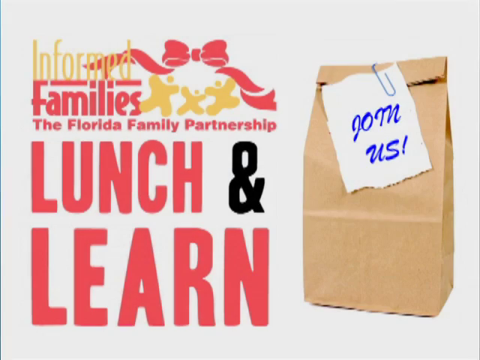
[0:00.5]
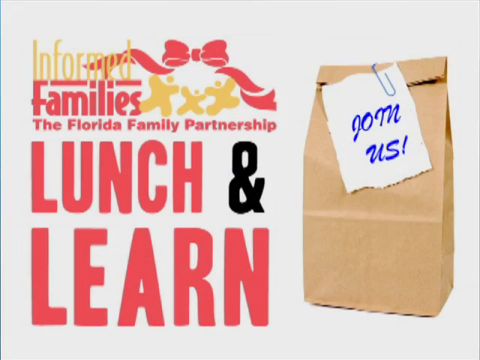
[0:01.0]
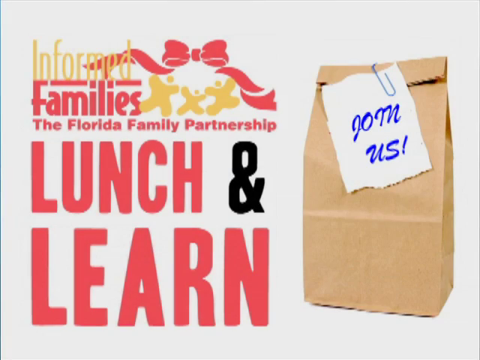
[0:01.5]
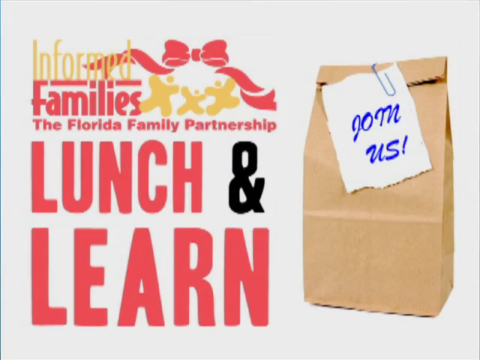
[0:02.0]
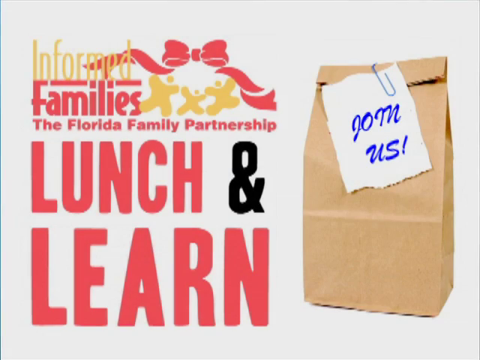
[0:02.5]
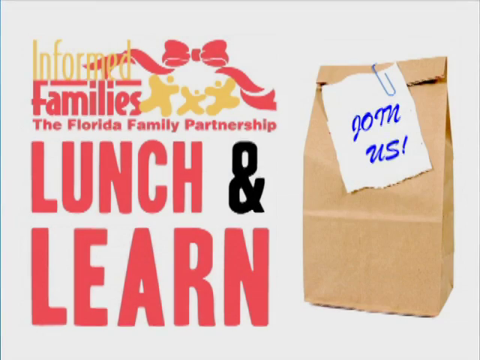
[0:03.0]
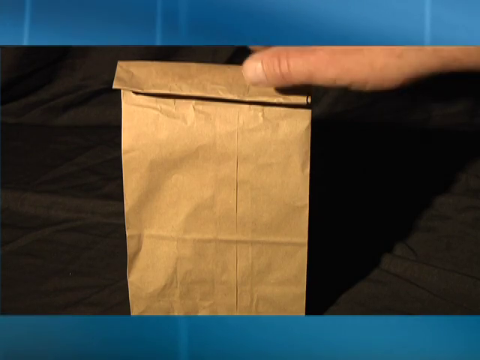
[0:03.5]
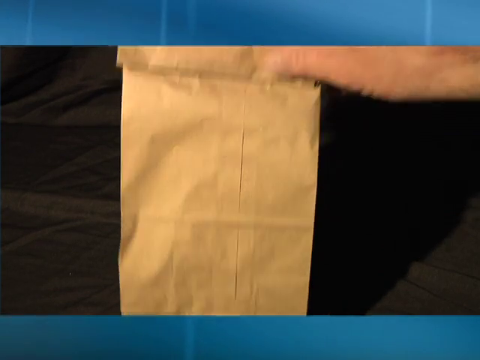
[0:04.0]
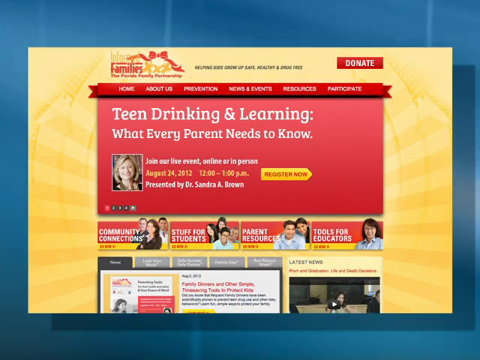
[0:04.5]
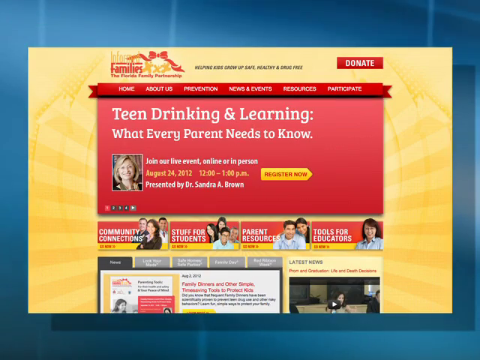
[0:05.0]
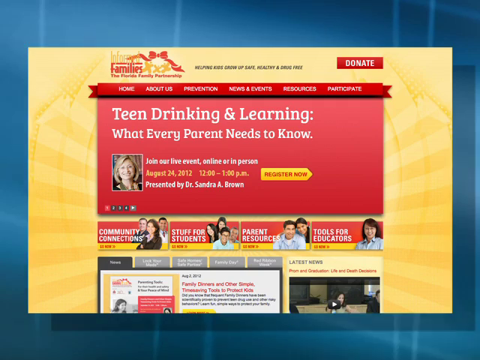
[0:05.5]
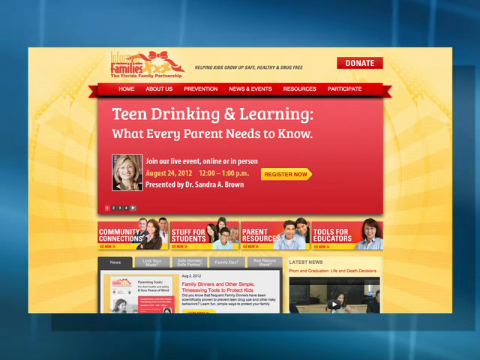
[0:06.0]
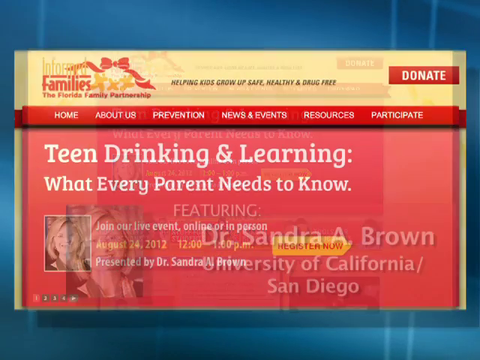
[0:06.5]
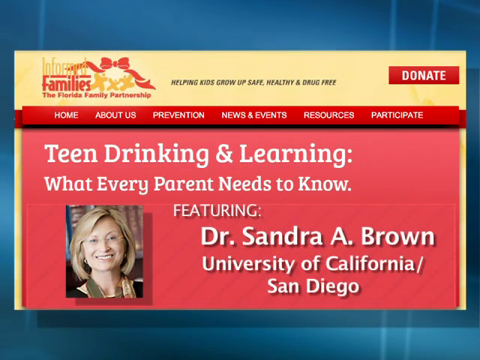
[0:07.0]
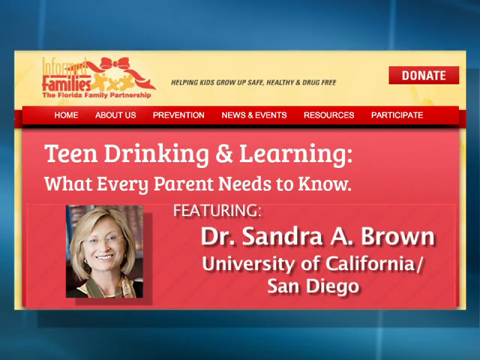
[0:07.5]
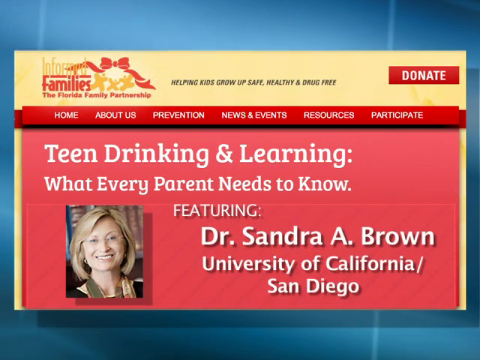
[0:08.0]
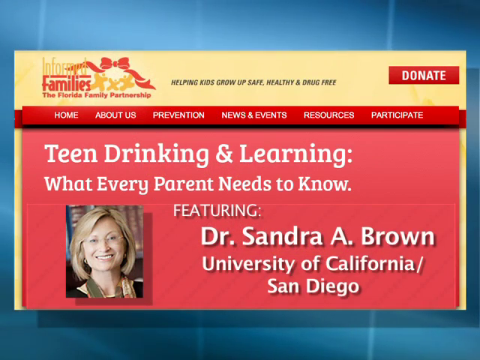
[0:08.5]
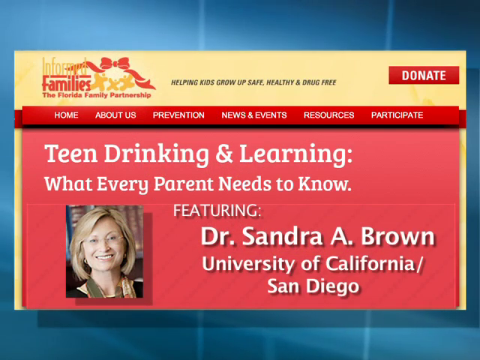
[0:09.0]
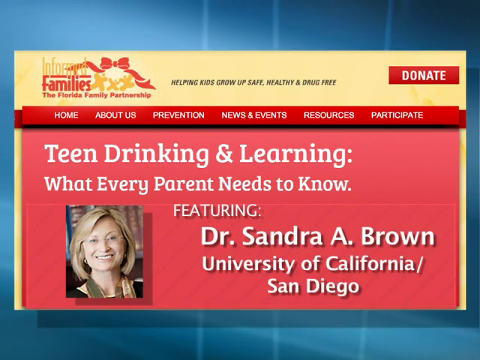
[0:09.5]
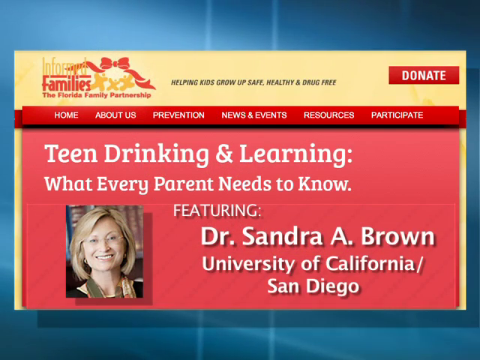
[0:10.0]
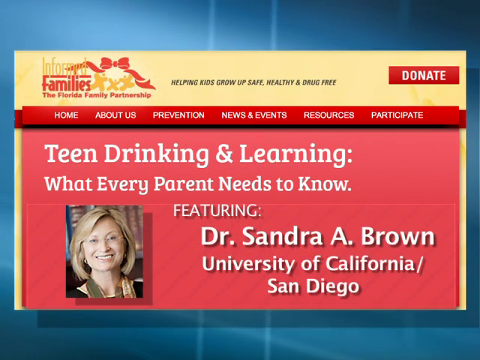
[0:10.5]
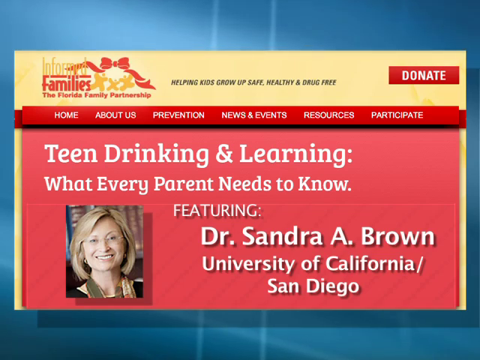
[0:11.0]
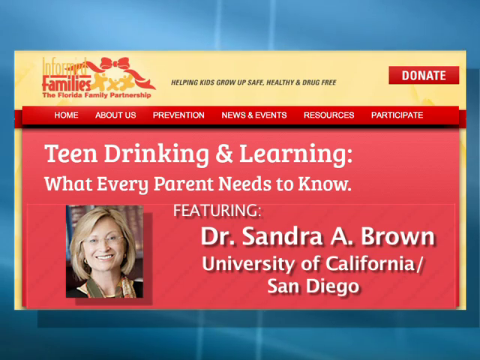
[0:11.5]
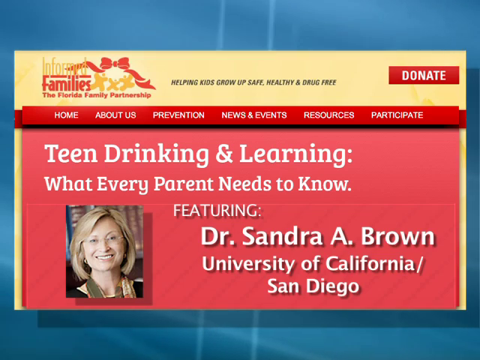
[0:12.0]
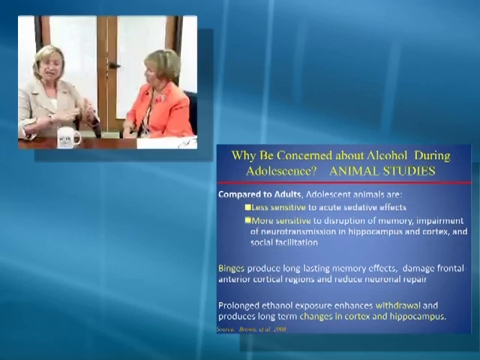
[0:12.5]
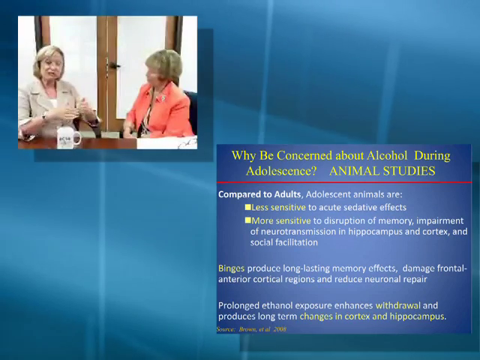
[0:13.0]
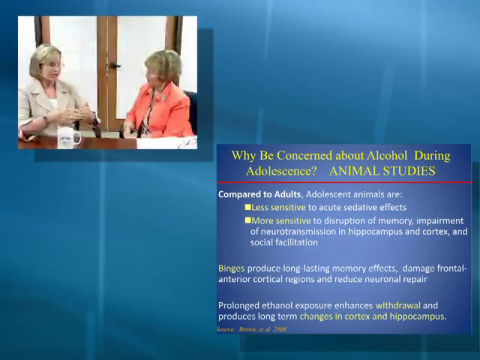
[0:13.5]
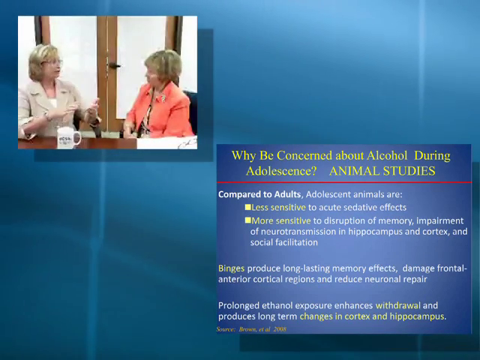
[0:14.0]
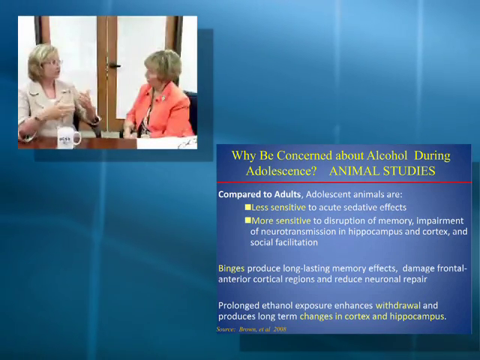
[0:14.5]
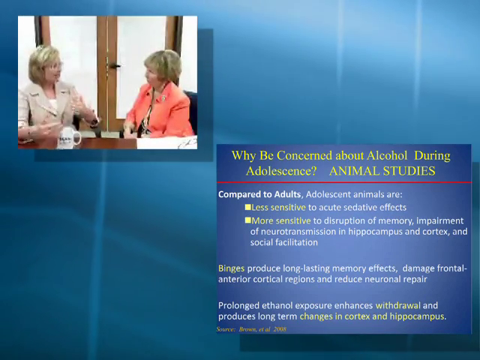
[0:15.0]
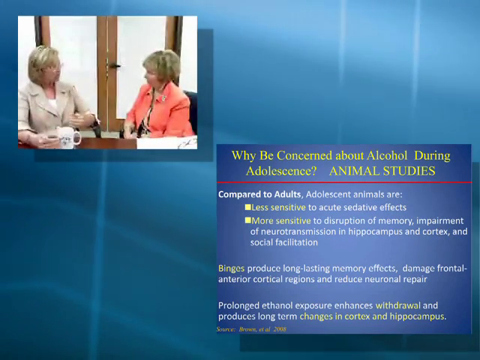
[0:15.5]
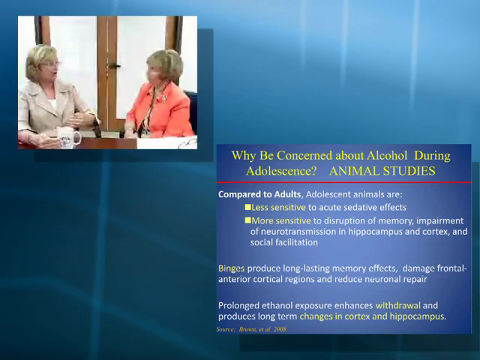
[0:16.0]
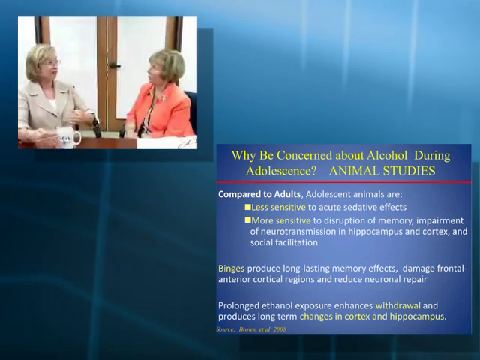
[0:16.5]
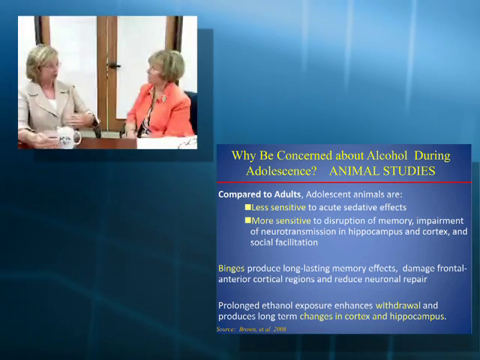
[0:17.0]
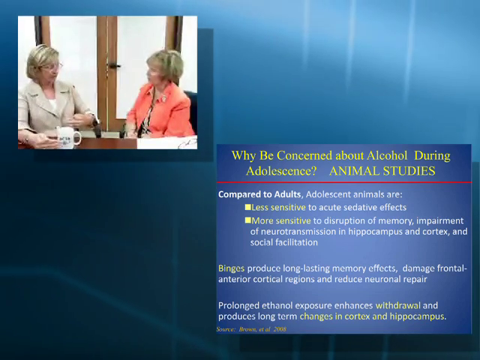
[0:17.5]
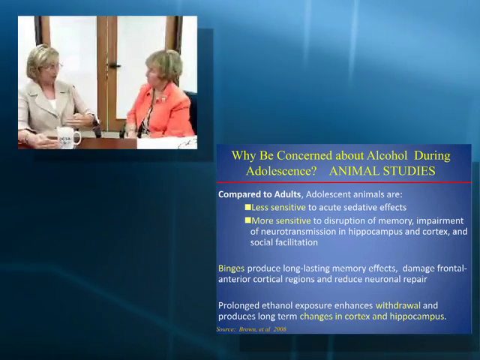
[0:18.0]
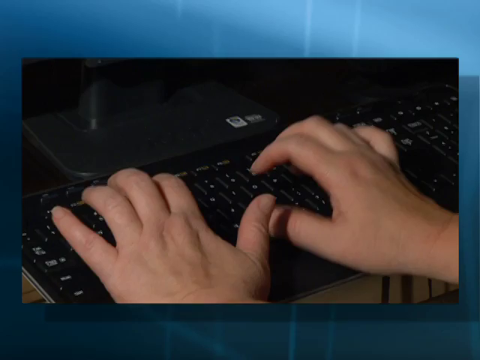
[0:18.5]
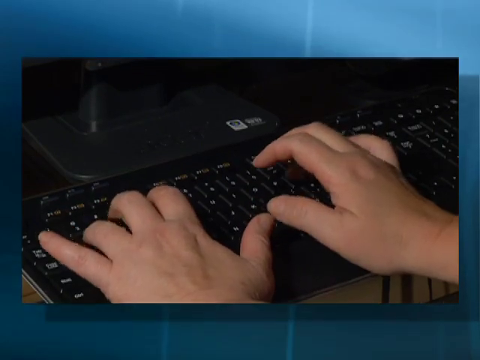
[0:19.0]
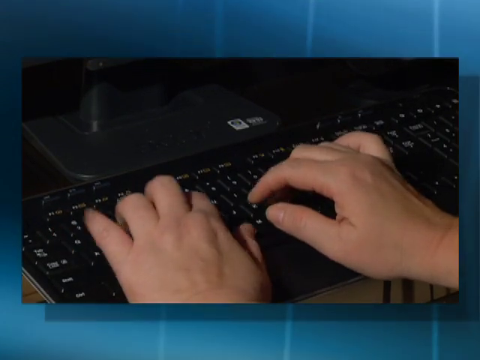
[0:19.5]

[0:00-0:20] The video, from Dr. Sandra A. Brown, is aimed at parents and families and concerns why to be concerned about alcohol during adolescence. The words "lunch and learn" are written on the screen. A foundation is also asking for donations.